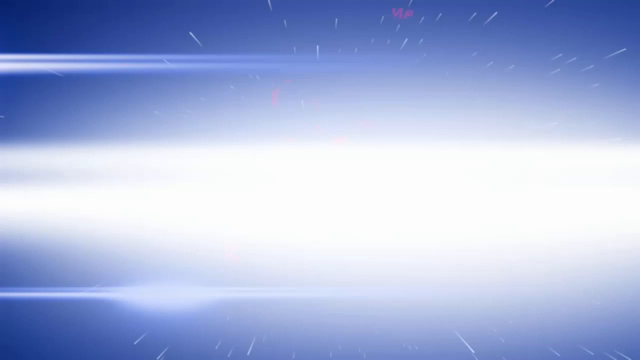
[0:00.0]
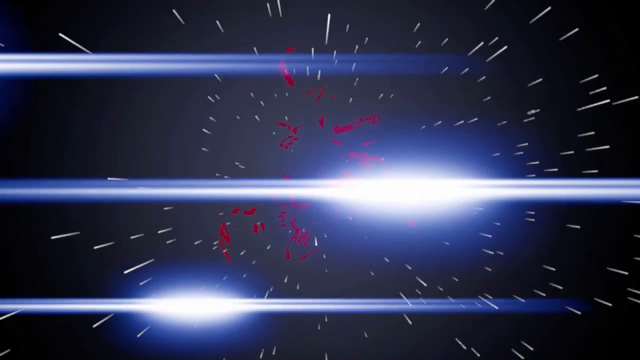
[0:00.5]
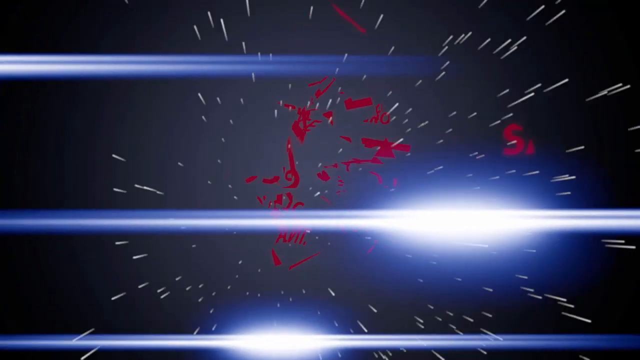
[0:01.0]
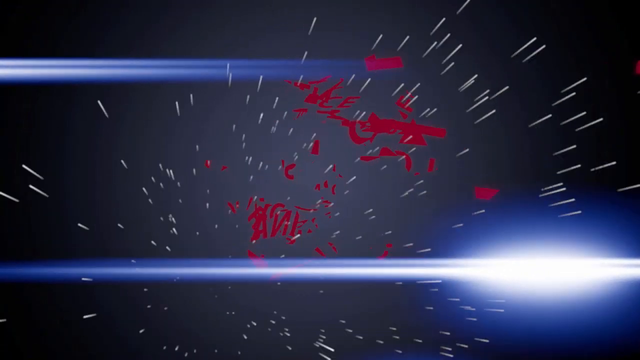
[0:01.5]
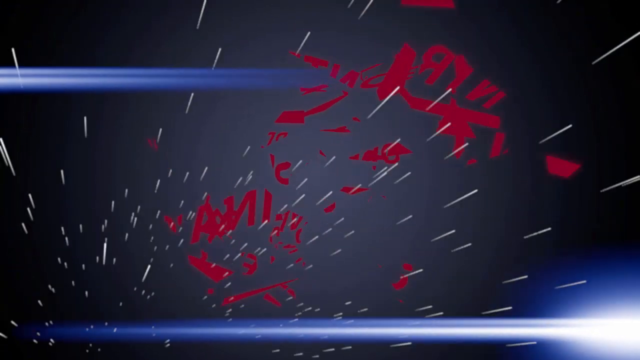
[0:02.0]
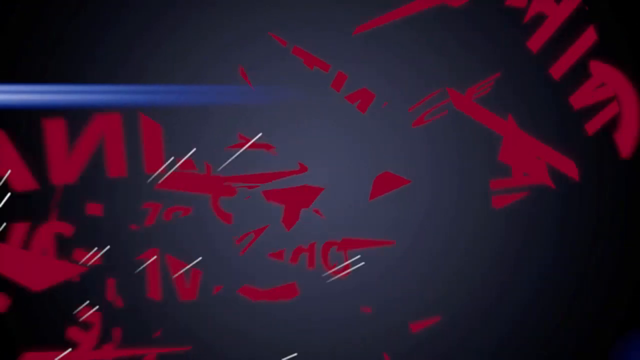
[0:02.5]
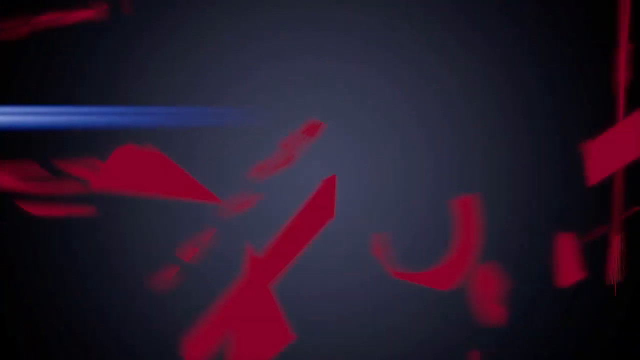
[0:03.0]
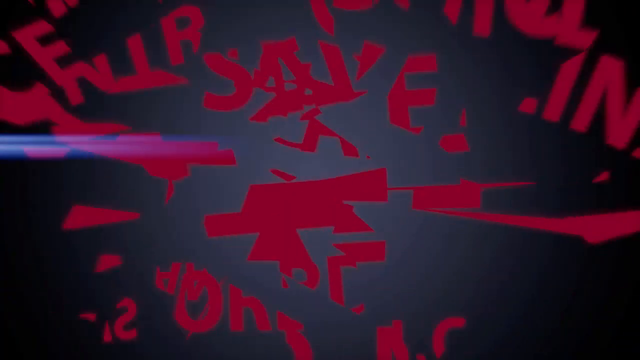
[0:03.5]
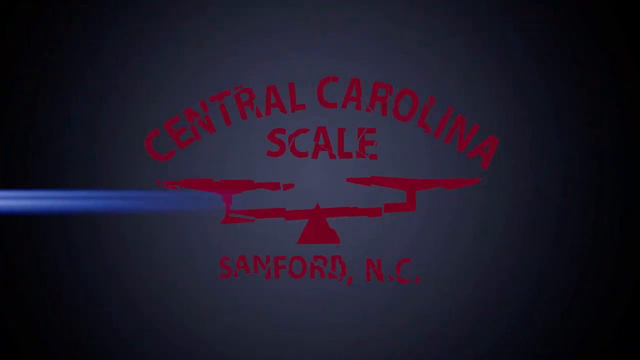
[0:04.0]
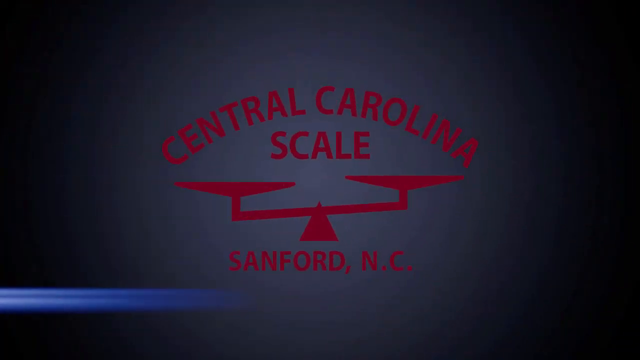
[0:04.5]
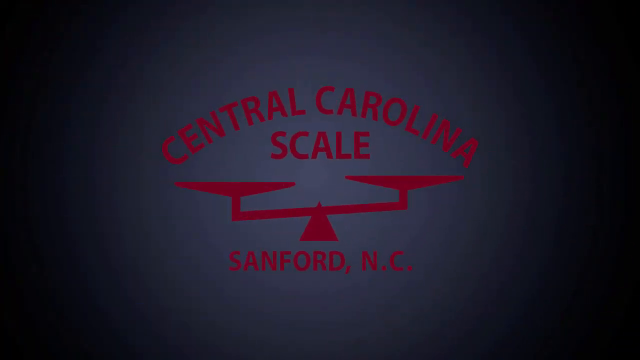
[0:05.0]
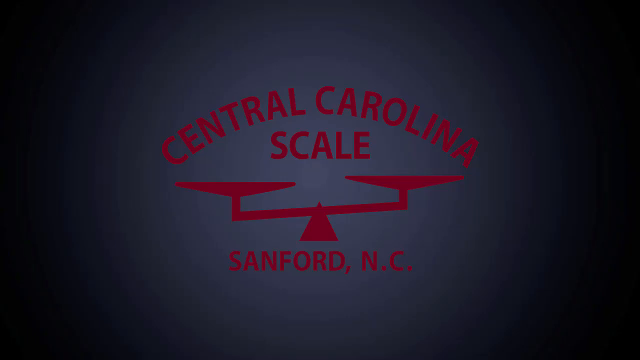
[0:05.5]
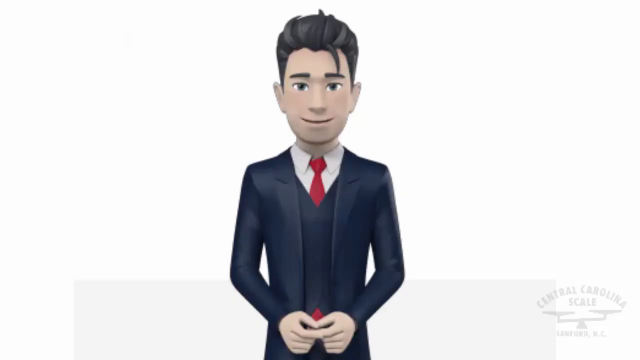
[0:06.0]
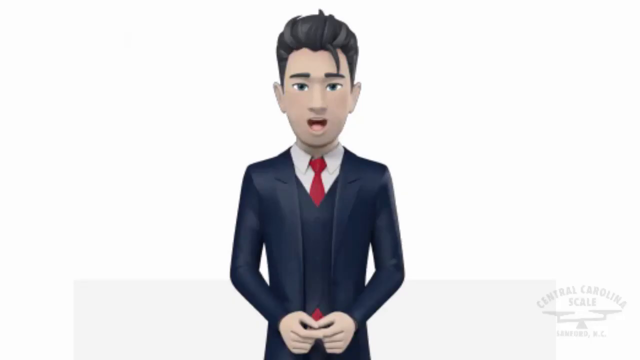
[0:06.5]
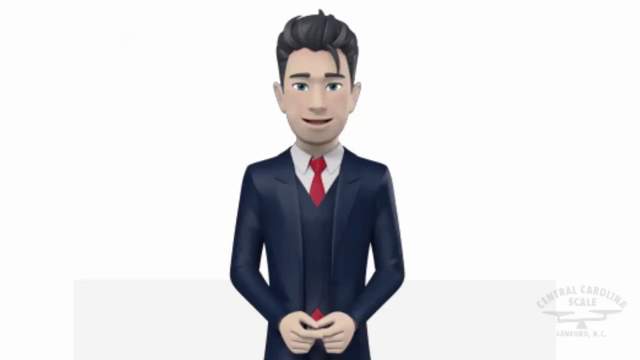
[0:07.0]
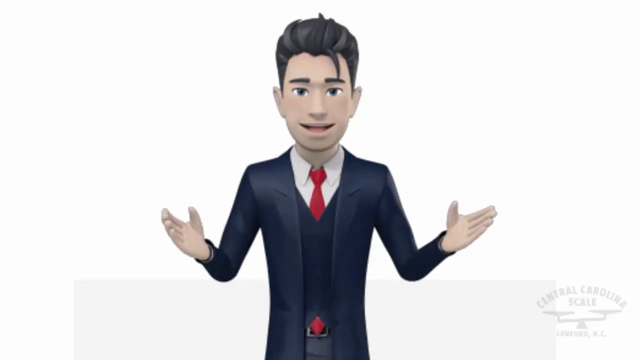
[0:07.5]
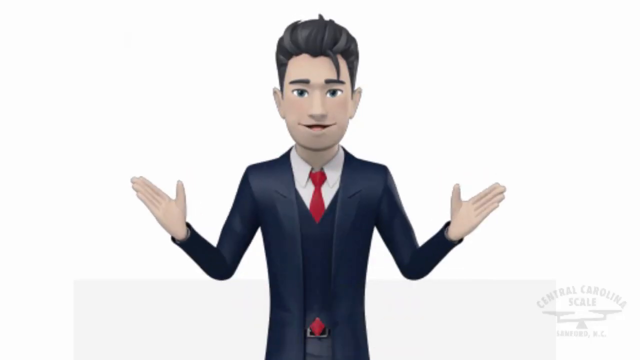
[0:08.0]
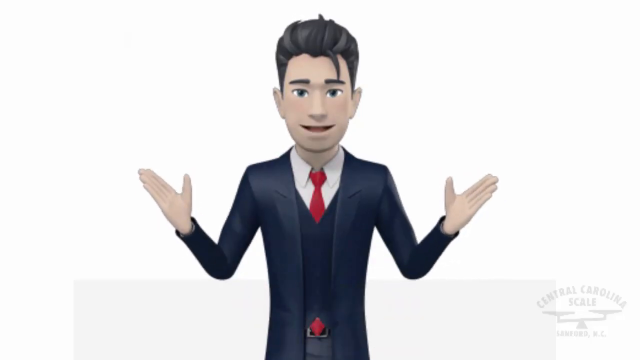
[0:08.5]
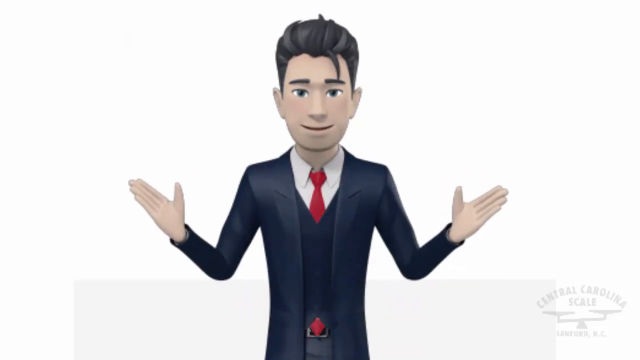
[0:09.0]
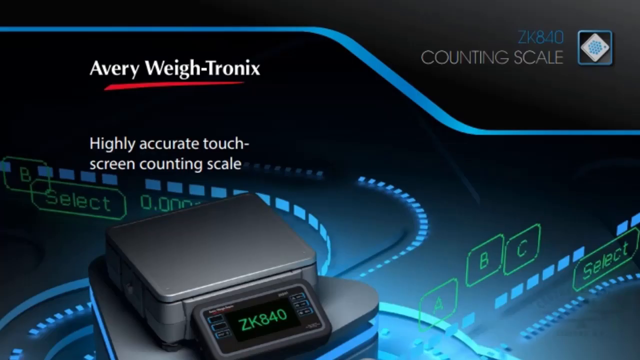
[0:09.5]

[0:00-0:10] A bright blue image flashes and gives way to a black background with lots of red text flying all over the screen. The text comes together to read "Central Carolina Scale" and "Sanford, North Carolina," all in red. The video then cuts to a cartoon figure who is speaking. He has dark hair and wears a black suit, a white shirt and a red tie, and he gestures with his hands as he talks.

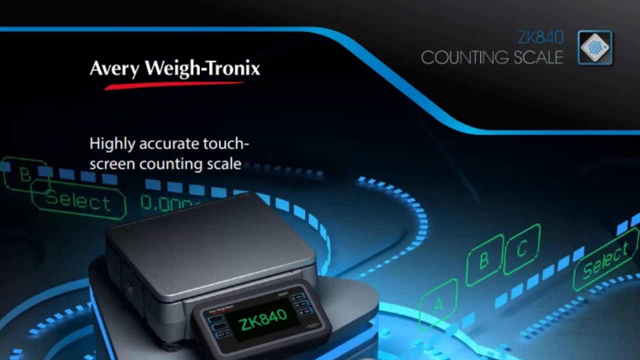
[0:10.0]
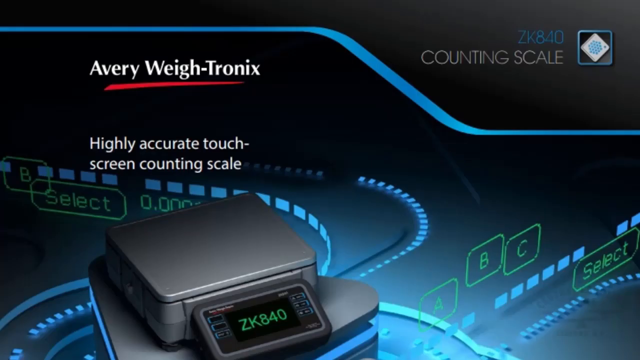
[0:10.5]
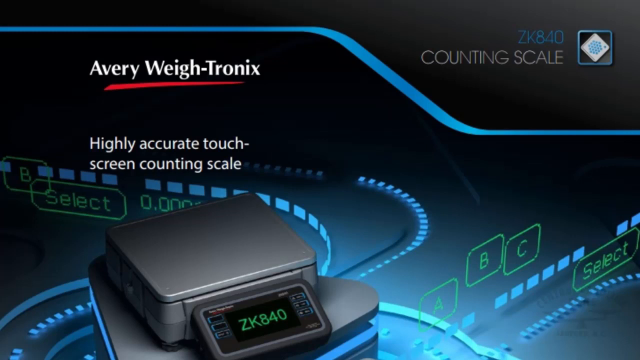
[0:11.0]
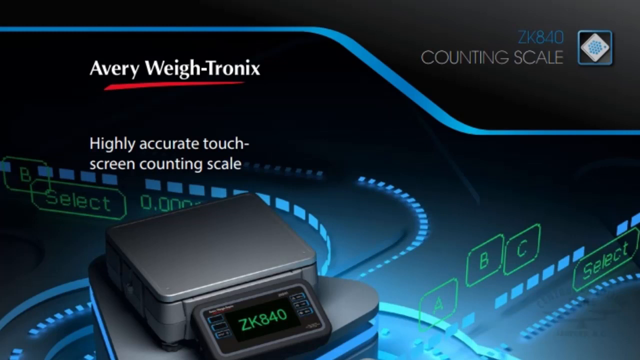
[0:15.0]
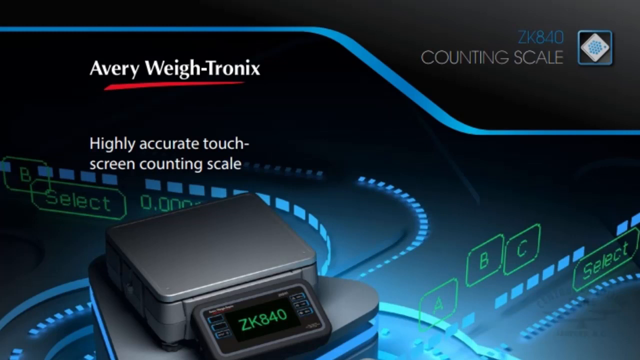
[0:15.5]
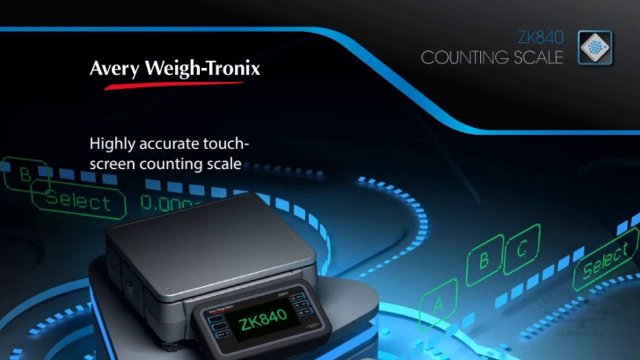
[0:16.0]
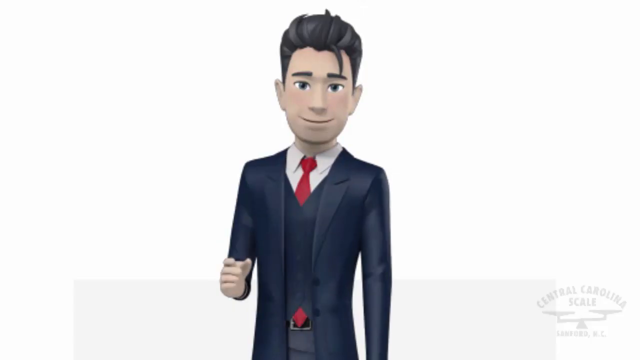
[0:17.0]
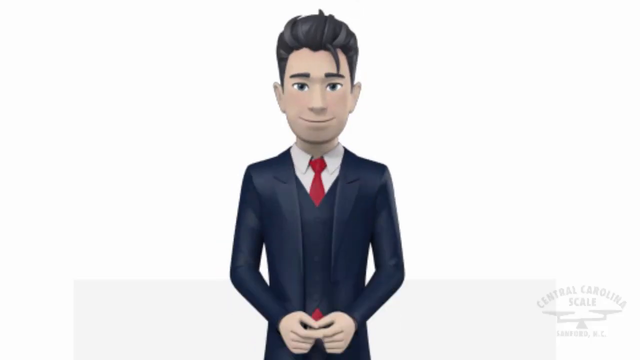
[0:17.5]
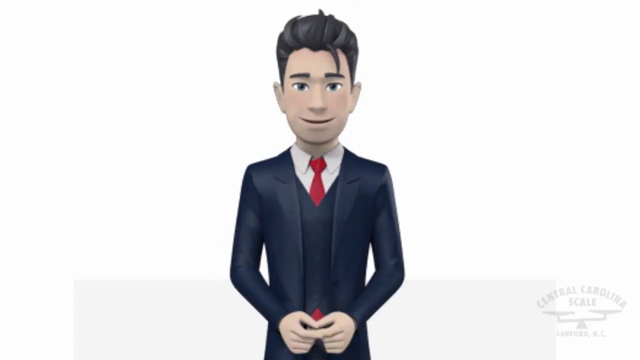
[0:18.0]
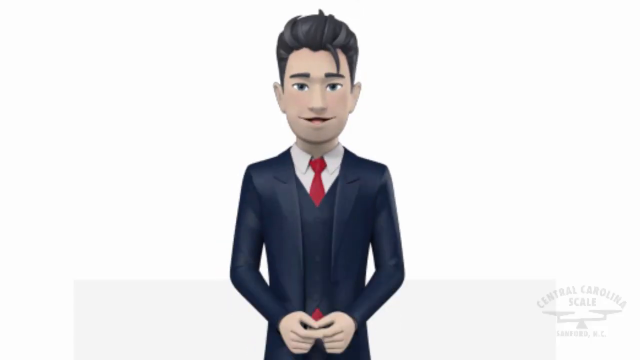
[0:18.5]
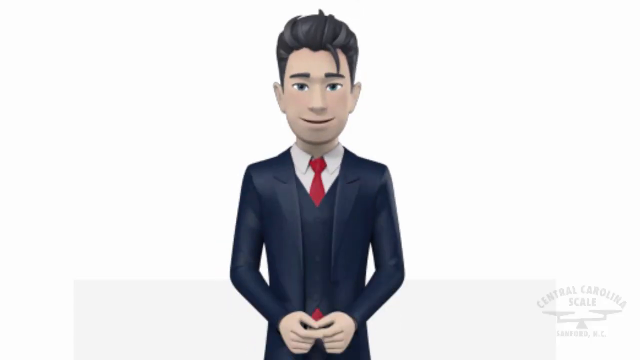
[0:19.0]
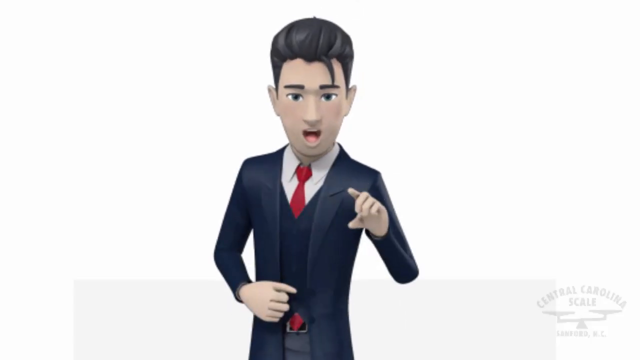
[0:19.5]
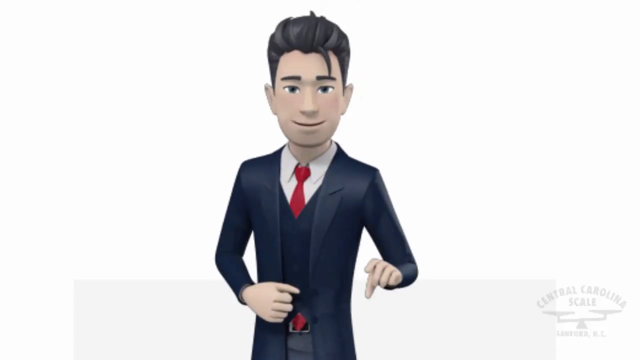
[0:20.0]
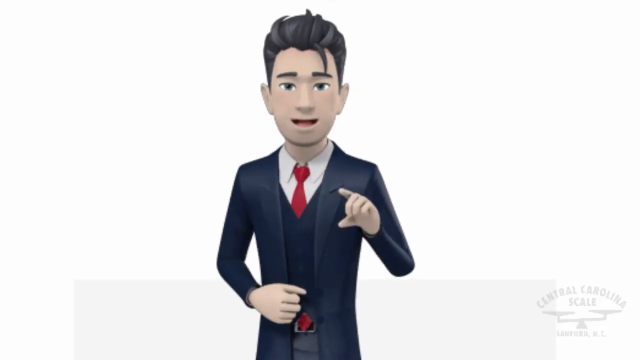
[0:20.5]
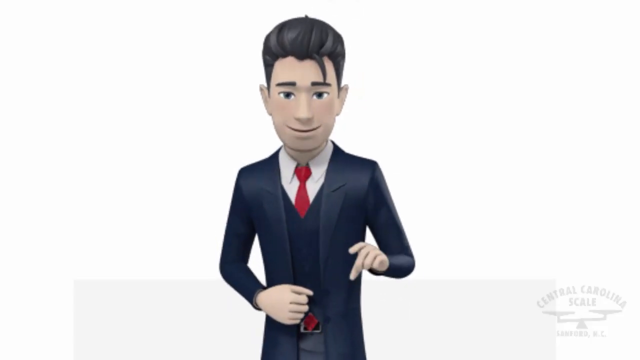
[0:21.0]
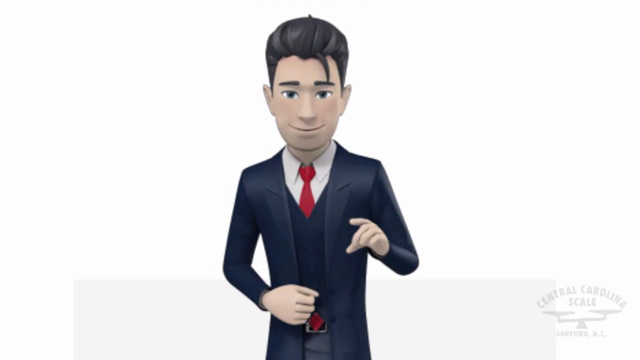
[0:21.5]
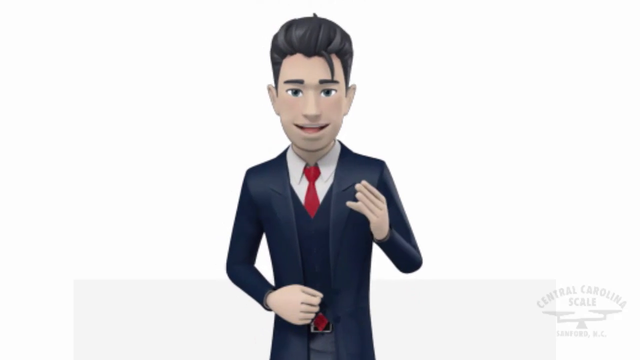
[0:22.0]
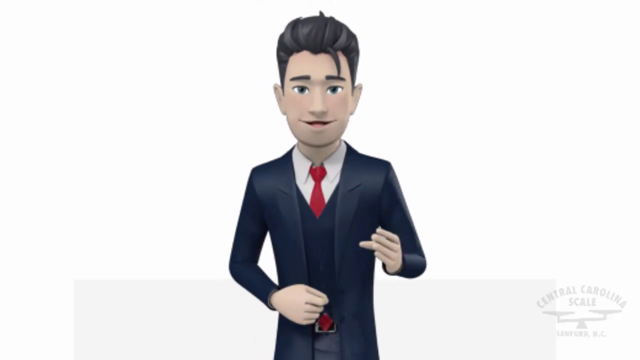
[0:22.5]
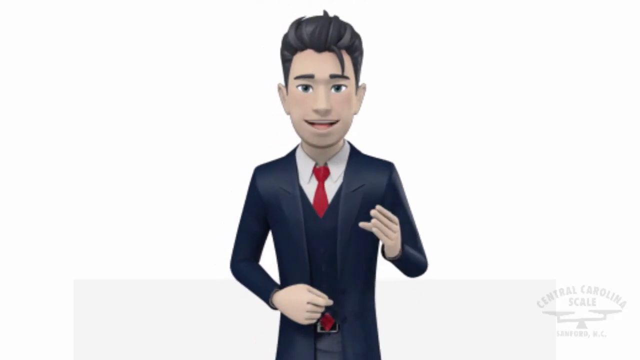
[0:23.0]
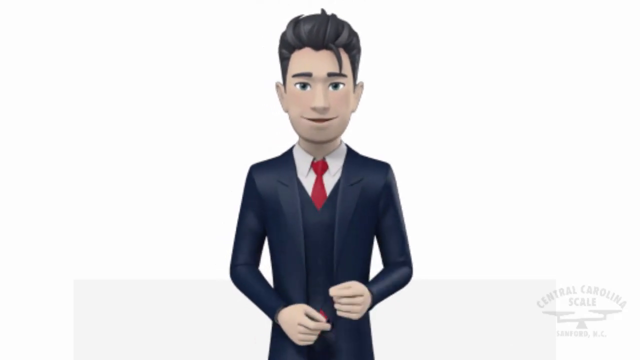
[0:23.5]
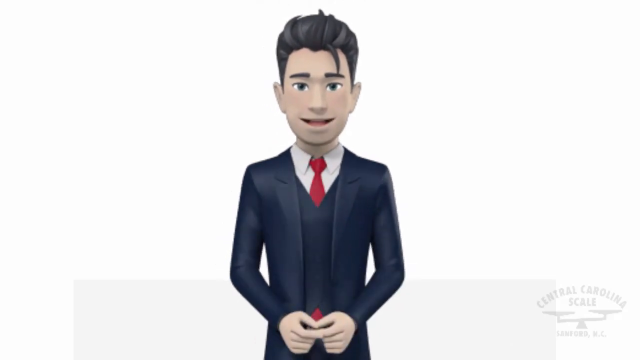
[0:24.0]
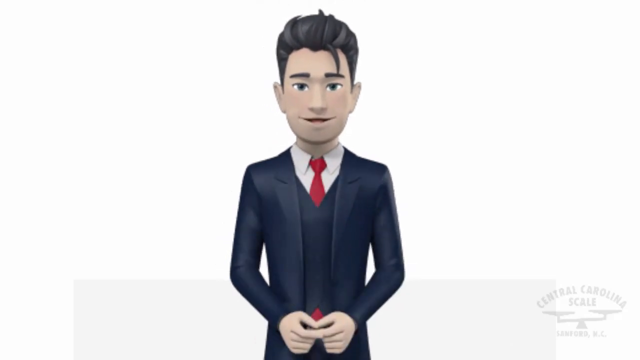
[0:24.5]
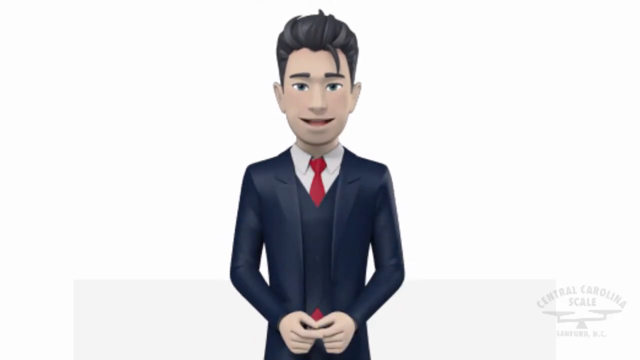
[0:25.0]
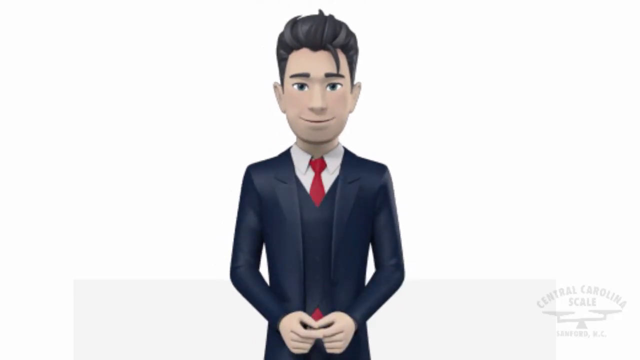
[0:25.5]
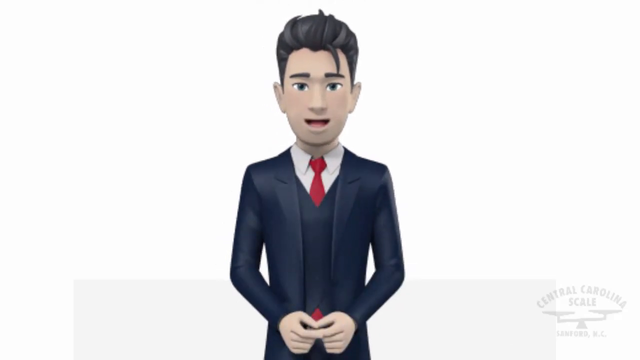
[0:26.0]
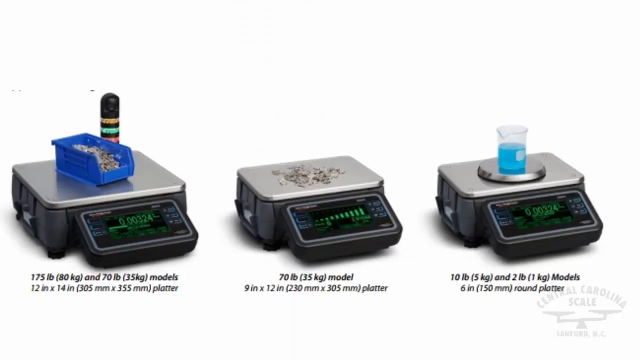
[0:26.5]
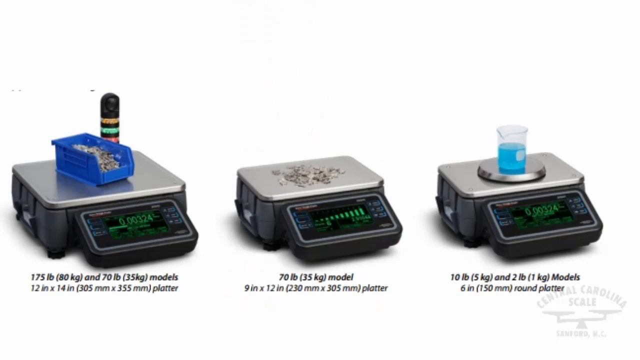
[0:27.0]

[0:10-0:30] An ad appears on the screen reading "Avery Weigh Tronics" and "highly active touch screen counting system." The background is multi-colored, with lots of buttons such as A, B, C and select showing in the back. At the top there is a diamond, with "counting scale" just to its left. The video goes to a cartoon man who is speaking. He has black hair with part of it falling on his face and wears a black suit, a white shirt and a red tie. He is a bit animated as he speaks: he raises his left finger, points toward the screen, moves it up and down, and finally puts his hands back together. Then a variety of scales is shown: three different scales with objects on them.